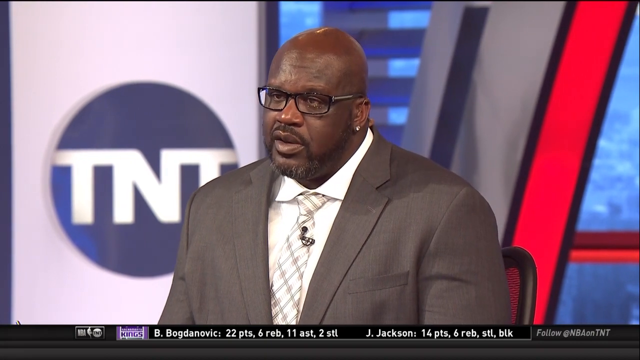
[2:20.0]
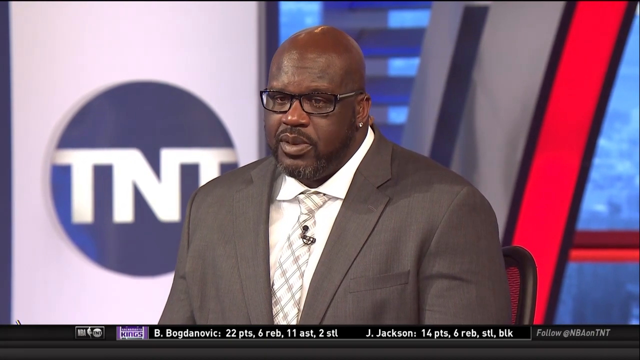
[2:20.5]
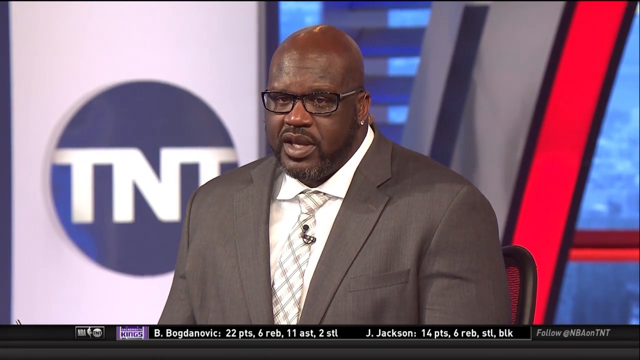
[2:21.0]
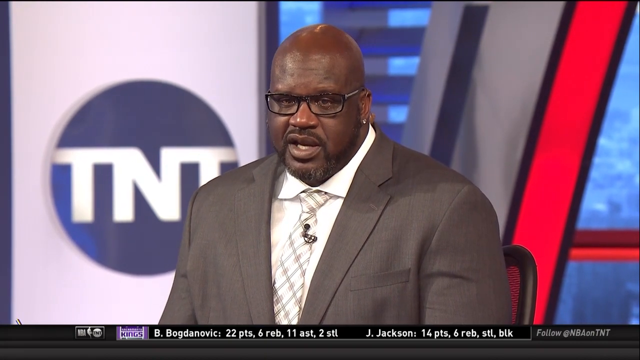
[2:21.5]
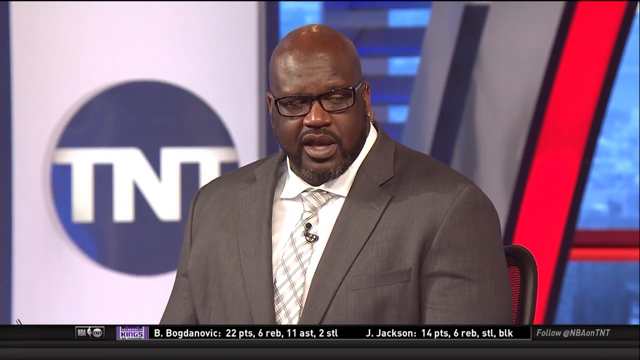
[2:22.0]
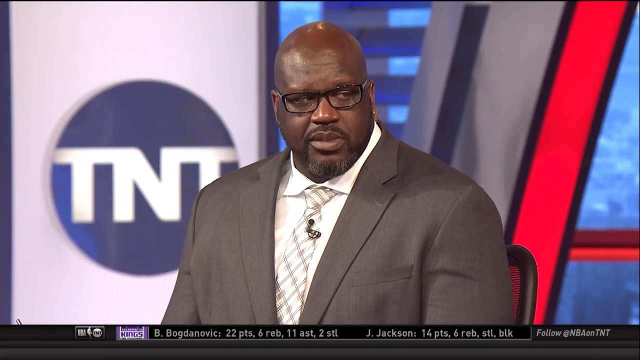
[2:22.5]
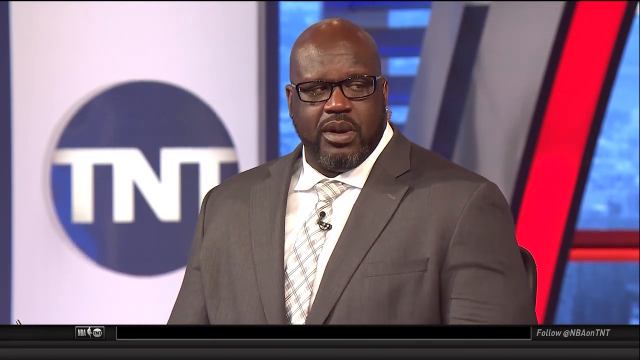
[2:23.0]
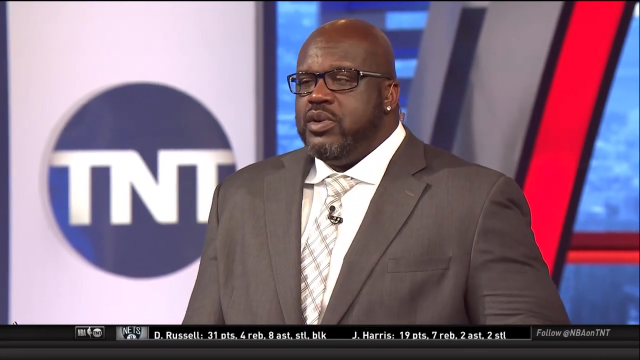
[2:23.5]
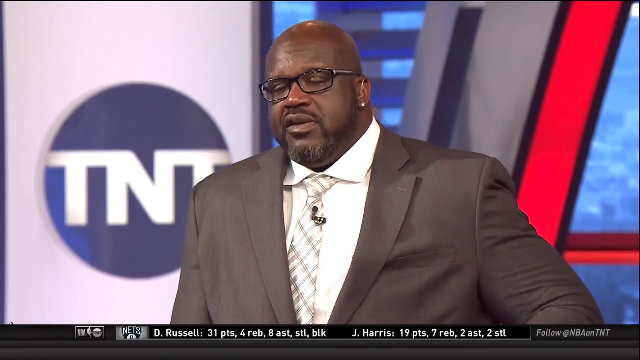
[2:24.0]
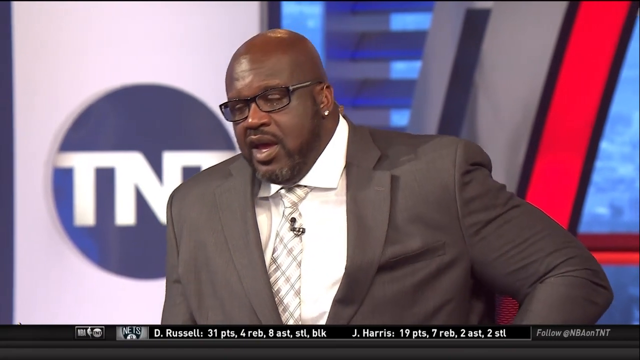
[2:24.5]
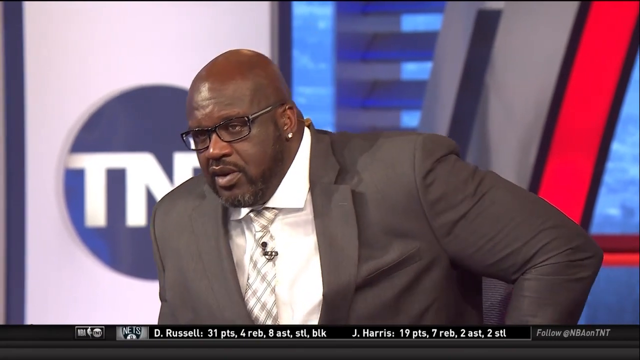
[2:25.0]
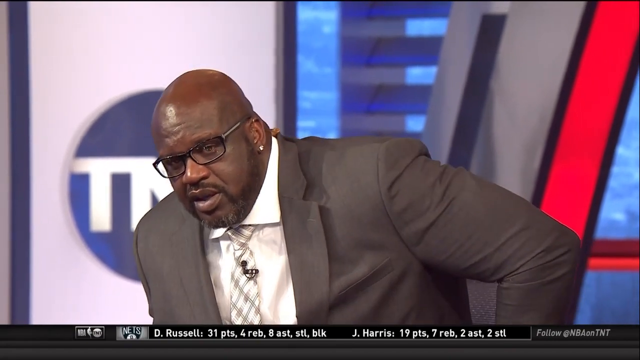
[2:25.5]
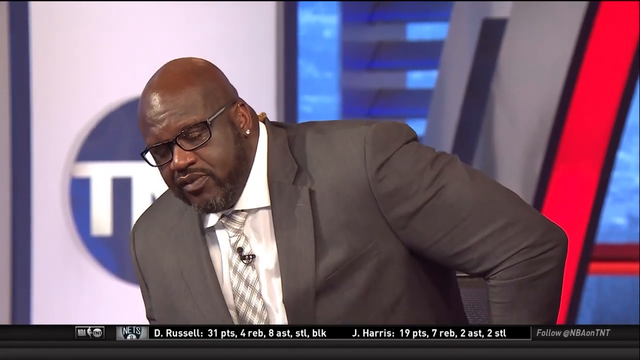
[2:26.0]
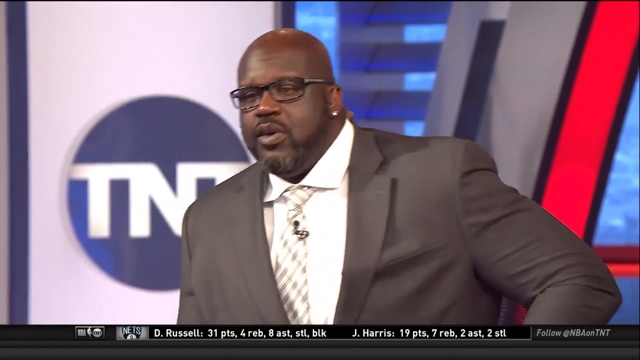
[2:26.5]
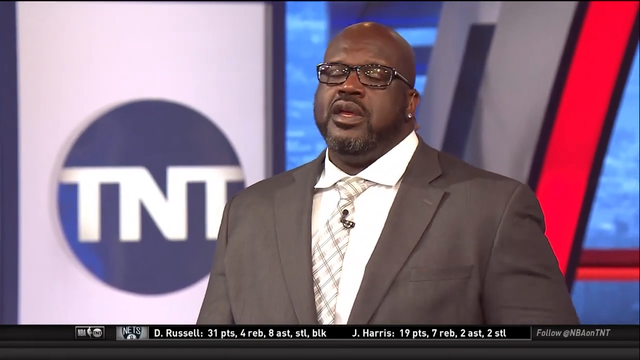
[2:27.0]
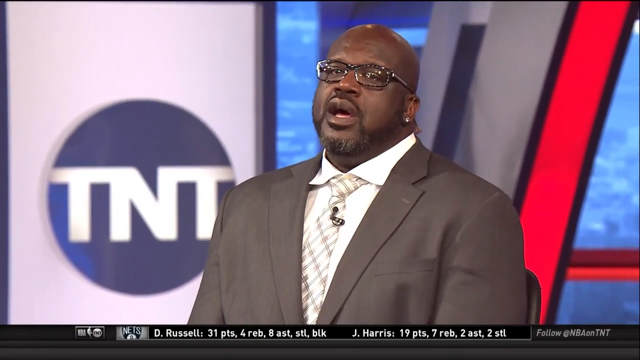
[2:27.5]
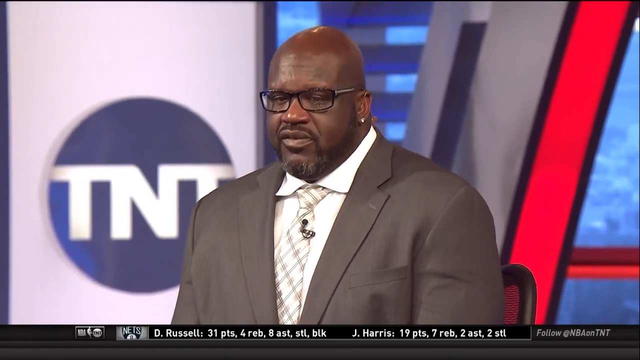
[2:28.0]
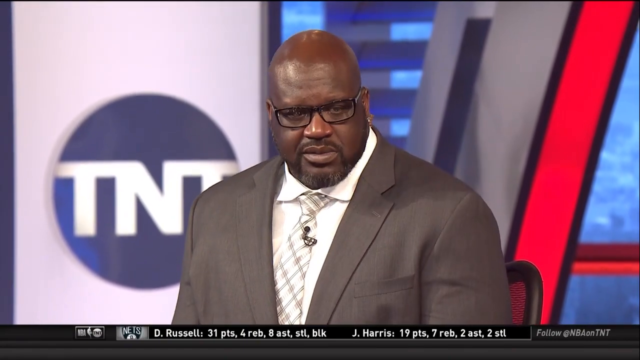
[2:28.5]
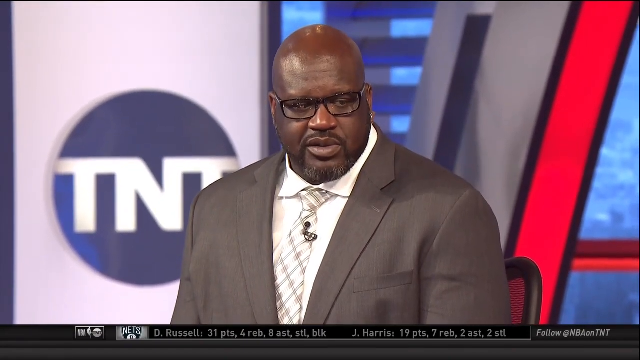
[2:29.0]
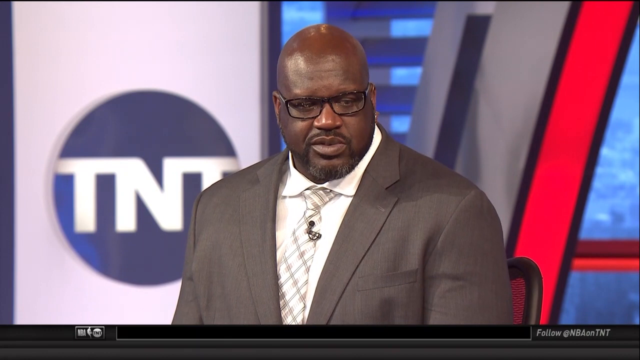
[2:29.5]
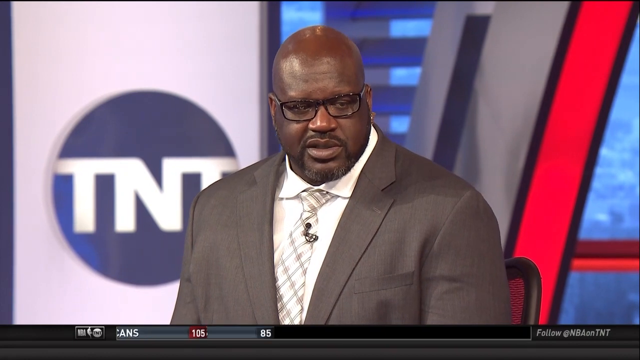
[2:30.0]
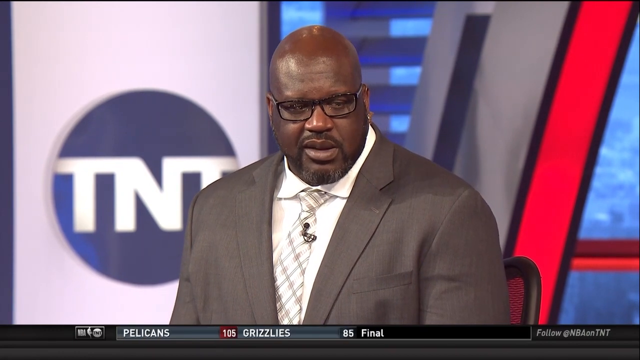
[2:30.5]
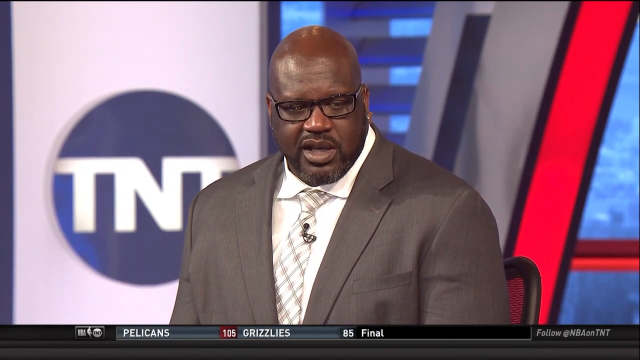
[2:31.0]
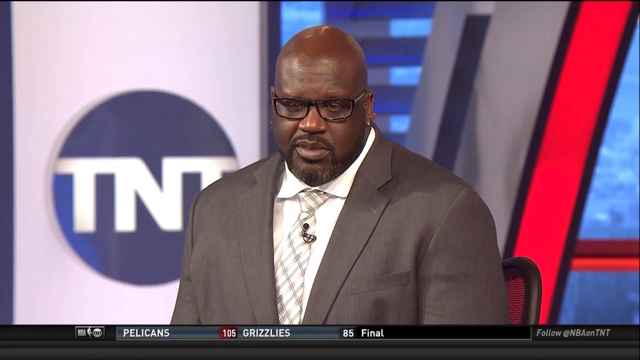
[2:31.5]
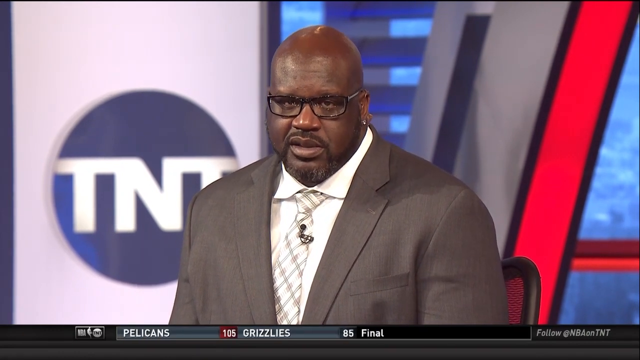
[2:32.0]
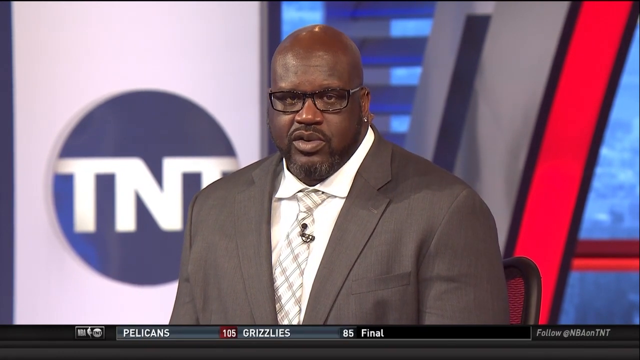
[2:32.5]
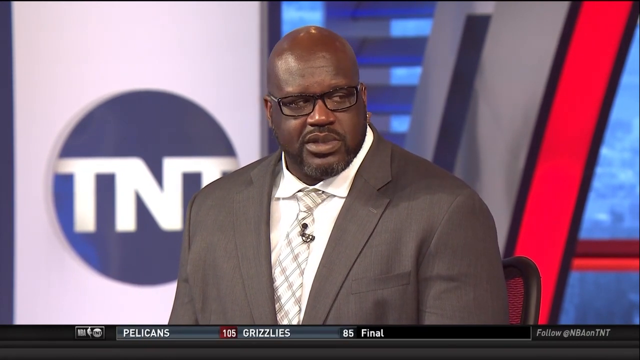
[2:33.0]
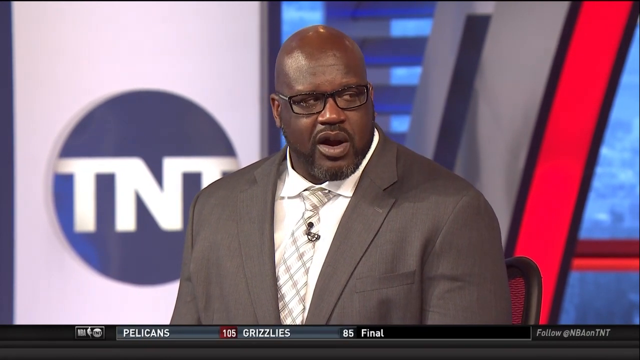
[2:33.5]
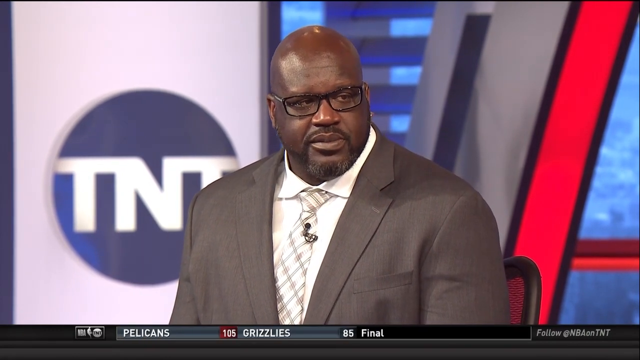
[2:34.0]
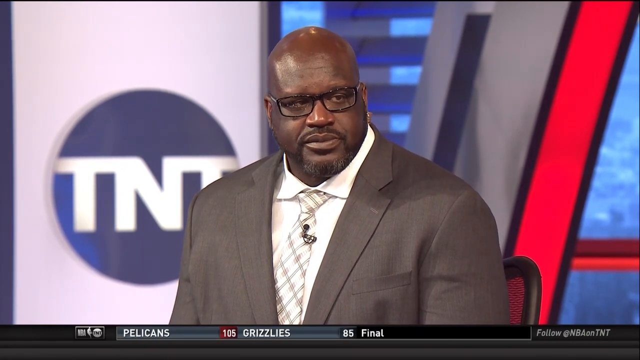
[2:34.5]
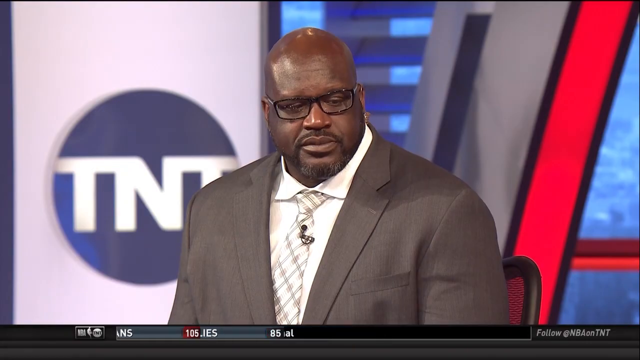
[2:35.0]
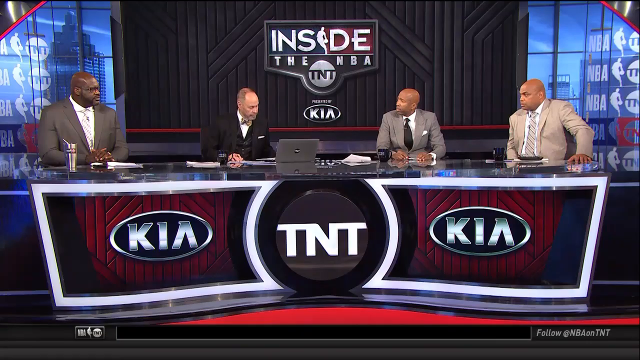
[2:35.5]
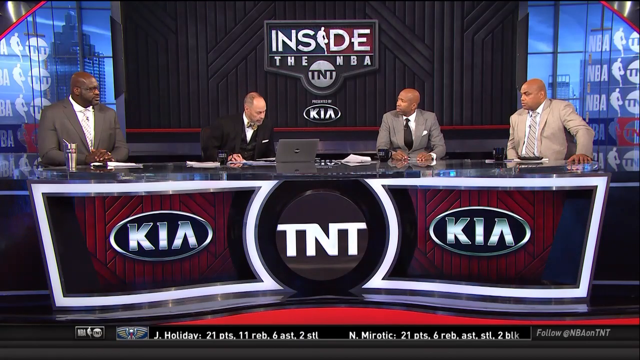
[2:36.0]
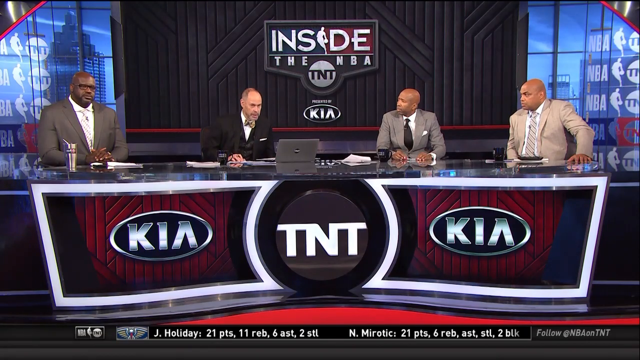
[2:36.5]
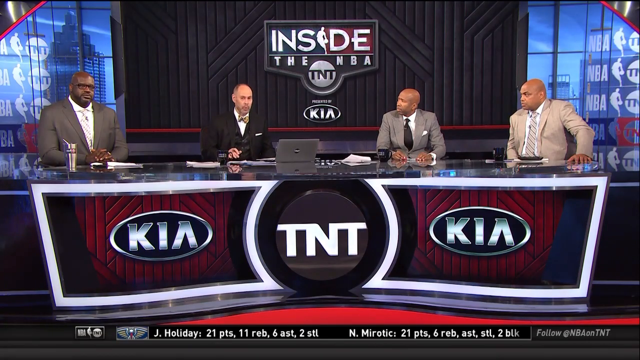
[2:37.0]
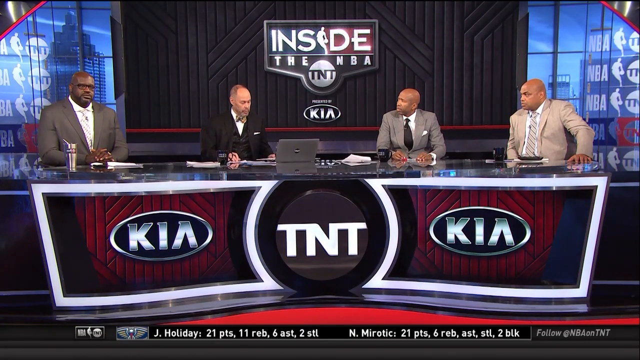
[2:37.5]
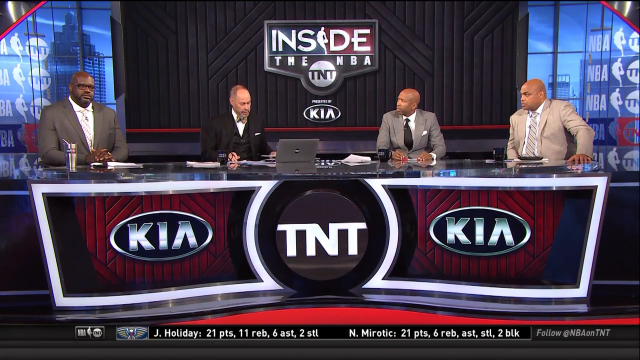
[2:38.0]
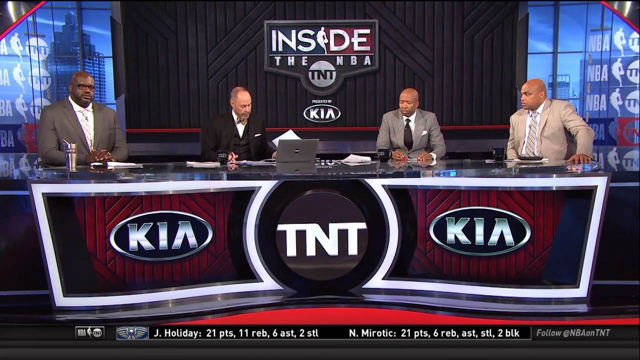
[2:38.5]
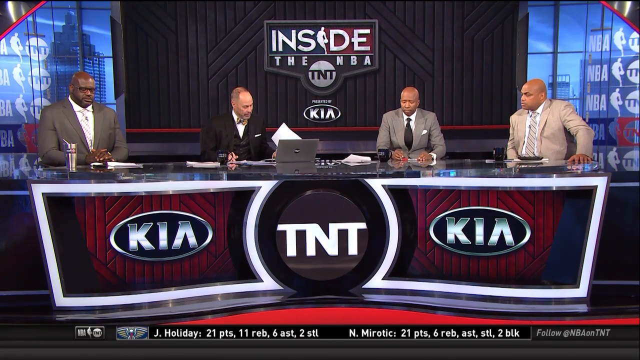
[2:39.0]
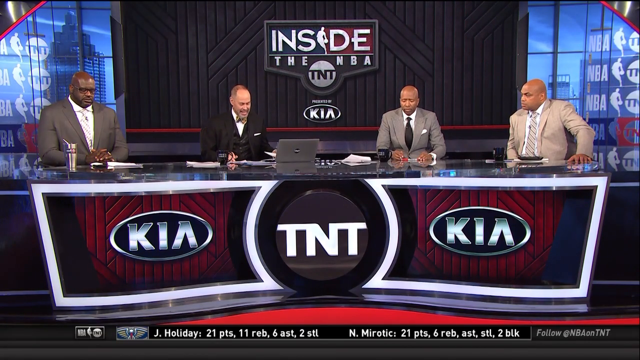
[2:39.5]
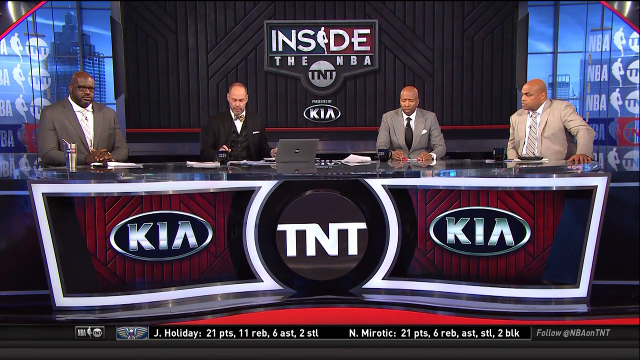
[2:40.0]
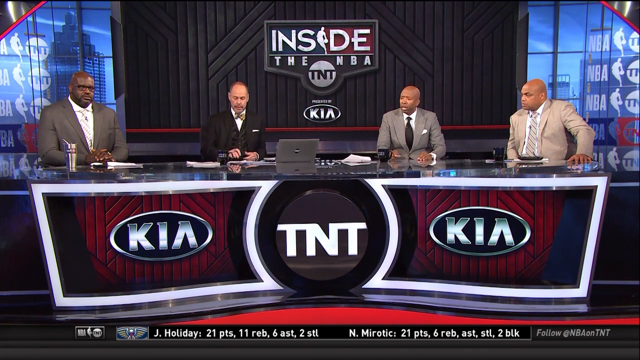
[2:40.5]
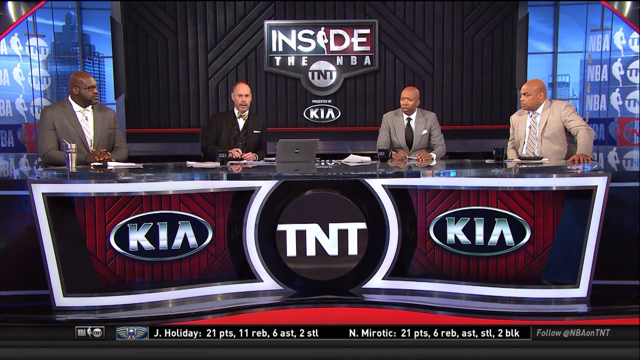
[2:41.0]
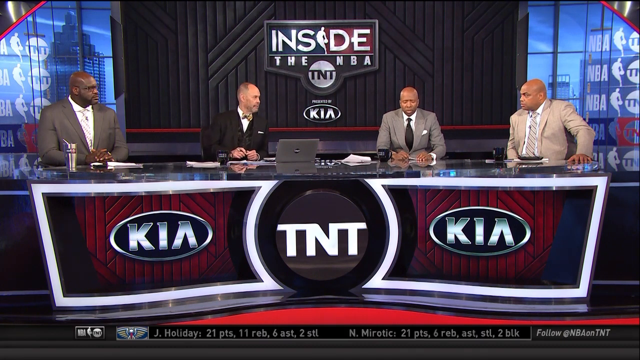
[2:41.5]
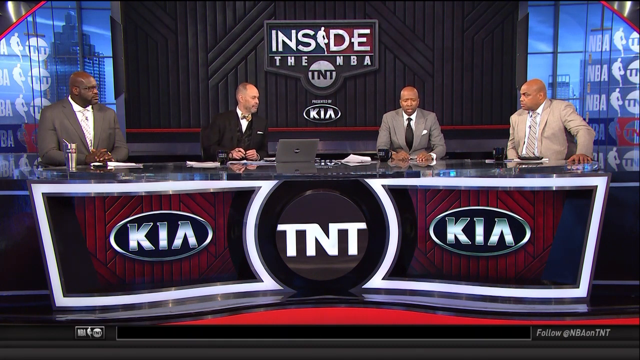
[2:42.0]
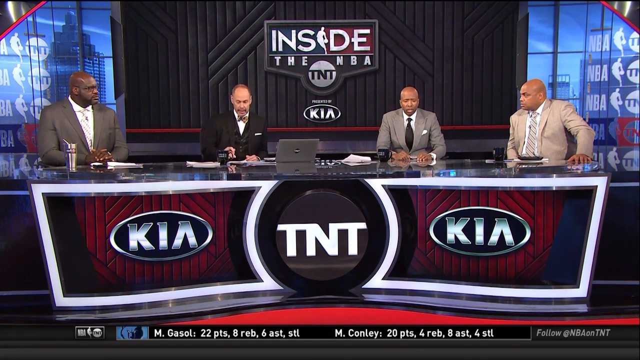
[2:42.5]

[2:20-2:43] An up-close shot shows a large black man wearing black-rimmed glasses, a dark brownish suit, a white button-up shirt and a white and light brown striped tie. A small piece of the black chair he is sitting in is visible. Over his right shoulder is a white wall with a blue circle containing the letters "TNT" in white. Over his left shoulder the wall is blue with a red stripe and a thick brown stripe running vertically, and another part of the wall is blue with dark blue stripes running horizontally. The camera then goes to another shot of a long, wide desk with "Kia" on the left of its front, "TNT" in the middle, and another "Kia." Four men sit at the desk. The one farthest to the left is a black man in a gray suit, white shirt and light brown and dark brown striped tie. To his left is a bald white man in a black suit with a bow tie. To his left is a black man in a gray suit and black tie, and to his left is a black man in a tan suit with a tan and brown striped tie.